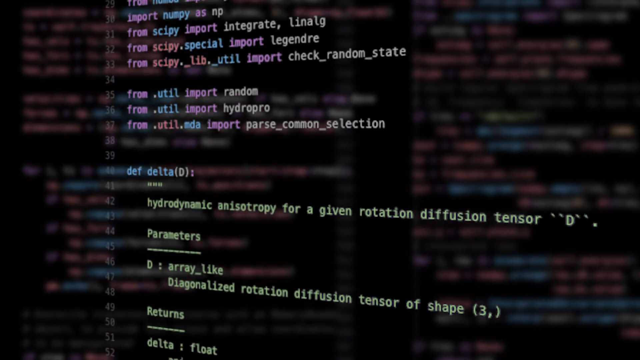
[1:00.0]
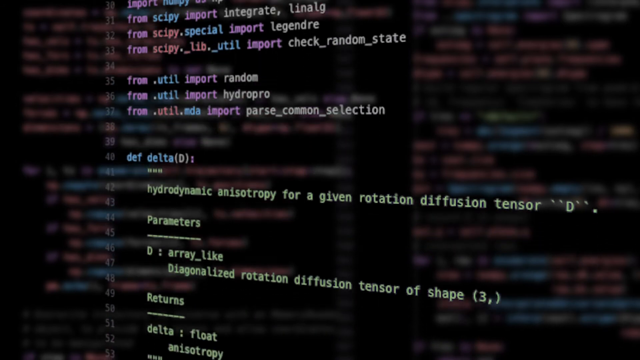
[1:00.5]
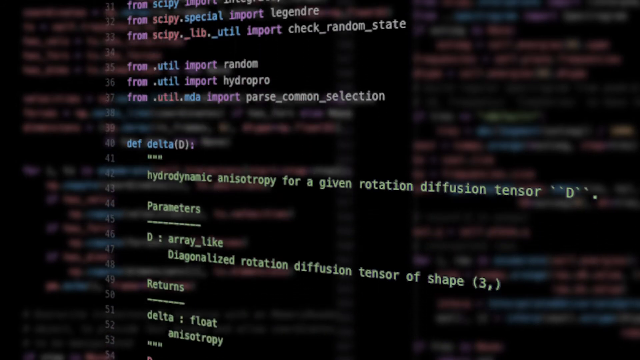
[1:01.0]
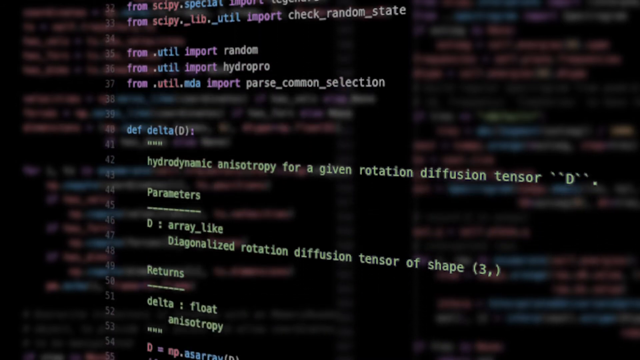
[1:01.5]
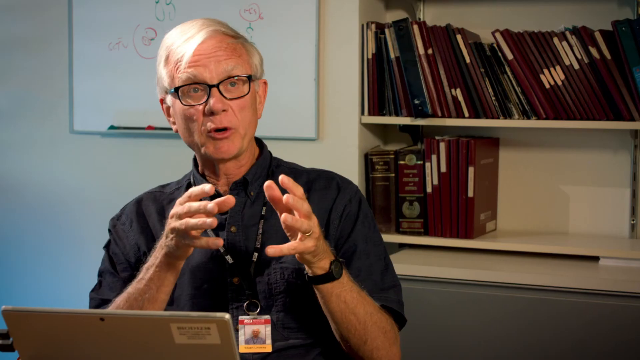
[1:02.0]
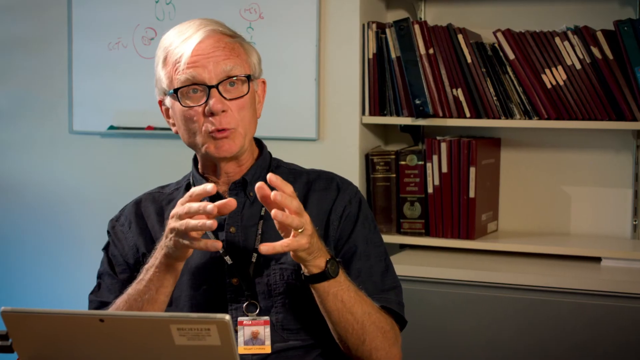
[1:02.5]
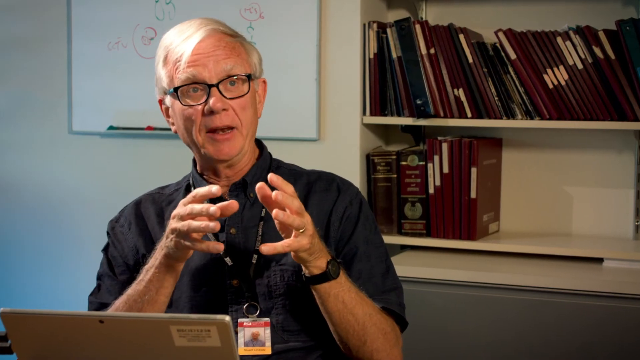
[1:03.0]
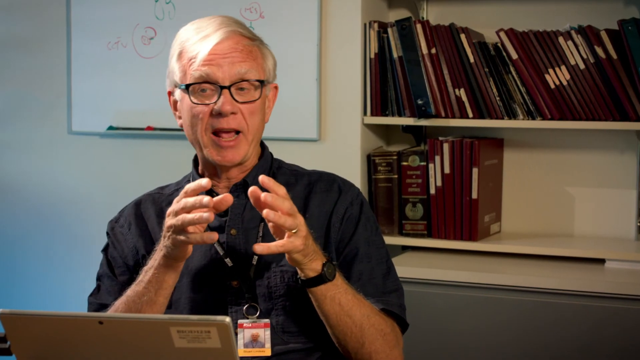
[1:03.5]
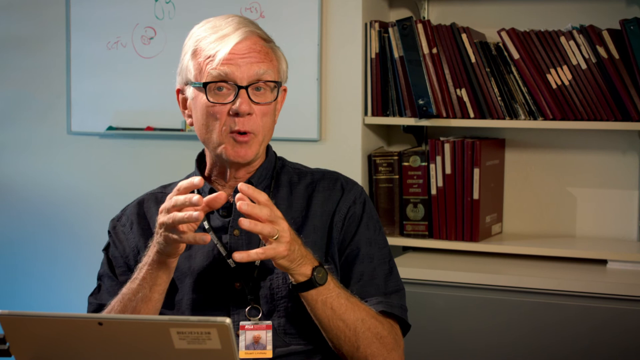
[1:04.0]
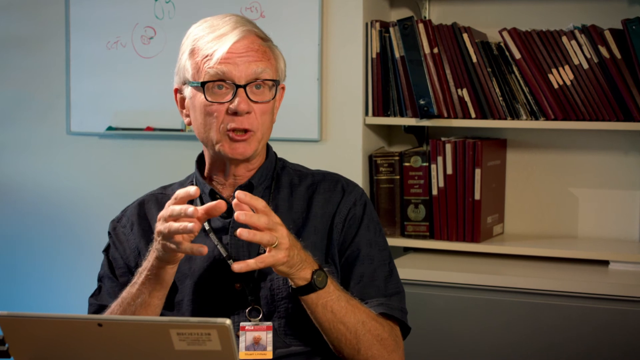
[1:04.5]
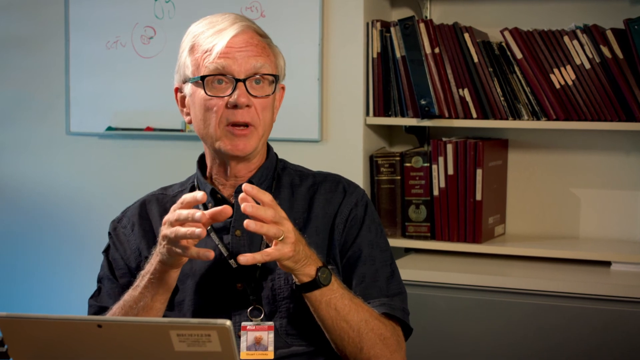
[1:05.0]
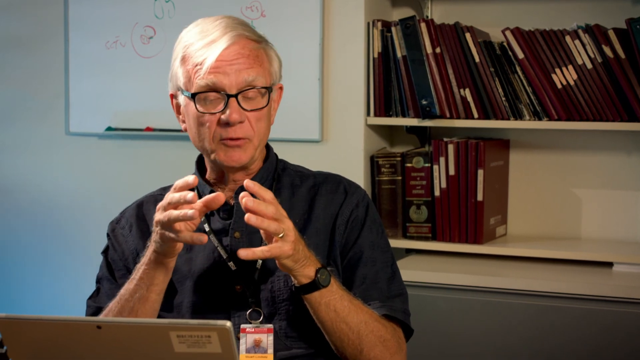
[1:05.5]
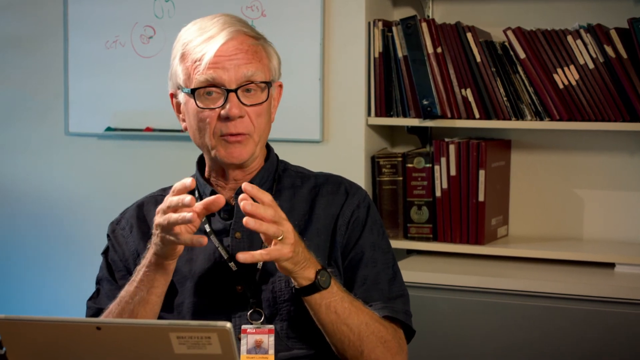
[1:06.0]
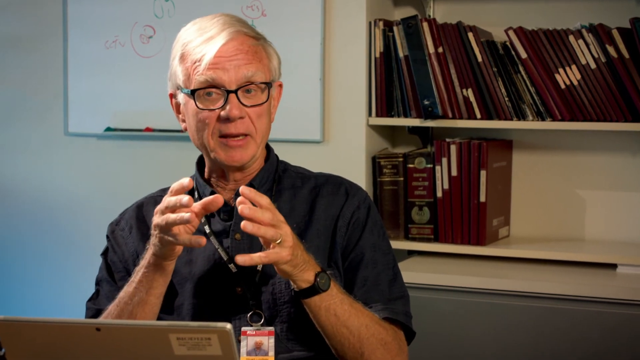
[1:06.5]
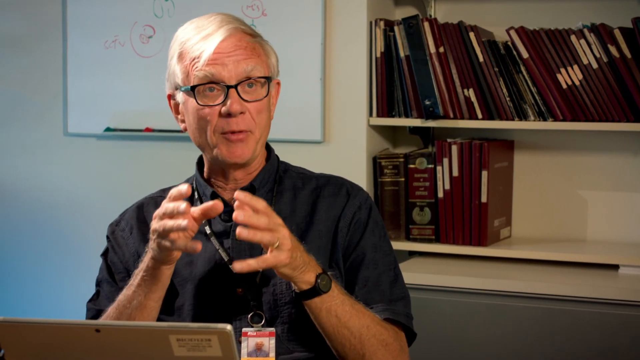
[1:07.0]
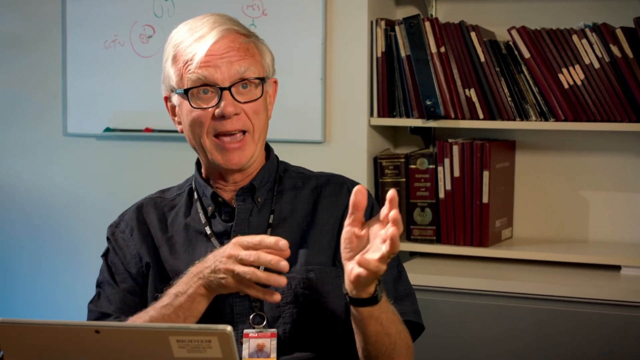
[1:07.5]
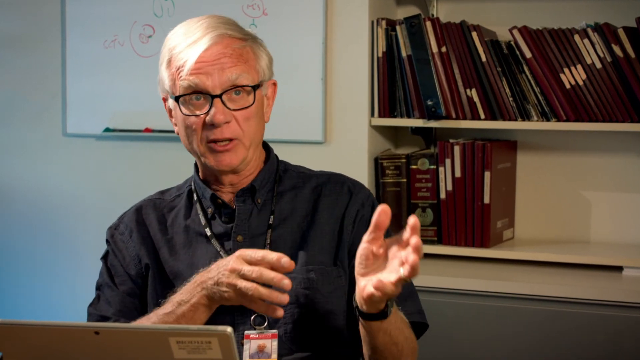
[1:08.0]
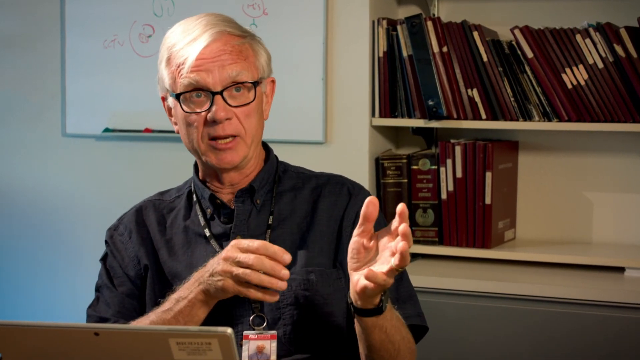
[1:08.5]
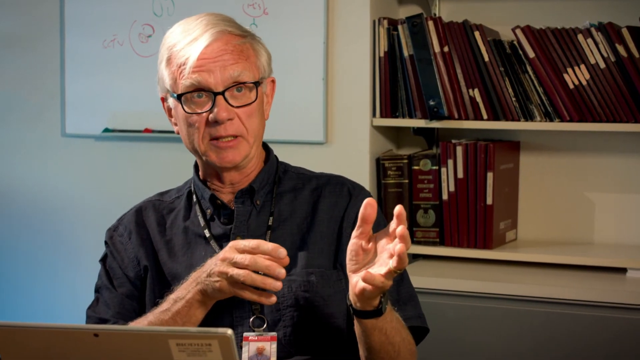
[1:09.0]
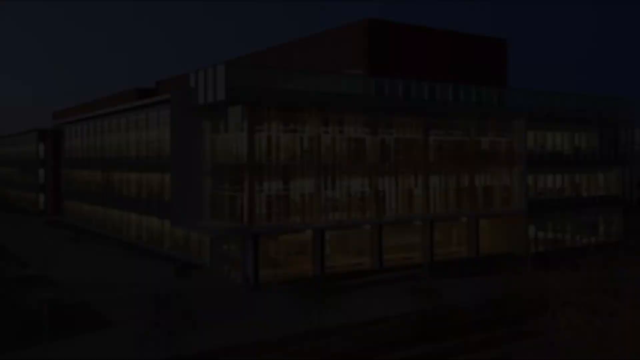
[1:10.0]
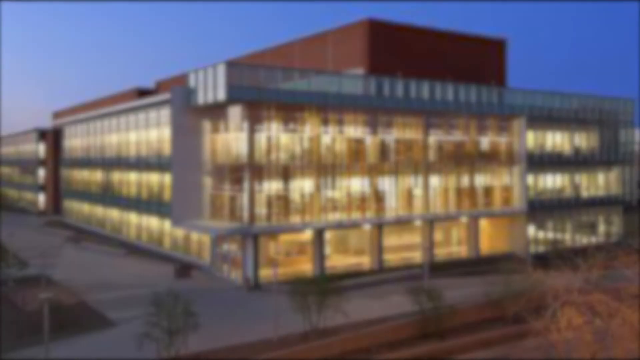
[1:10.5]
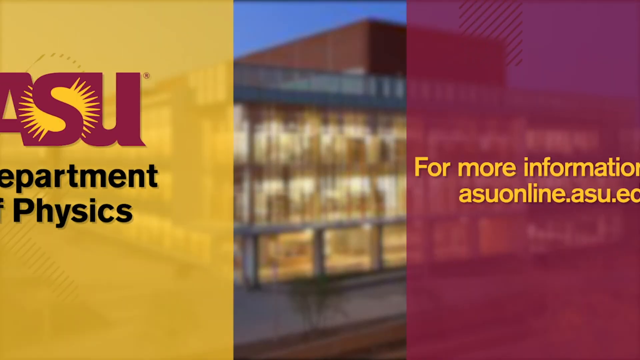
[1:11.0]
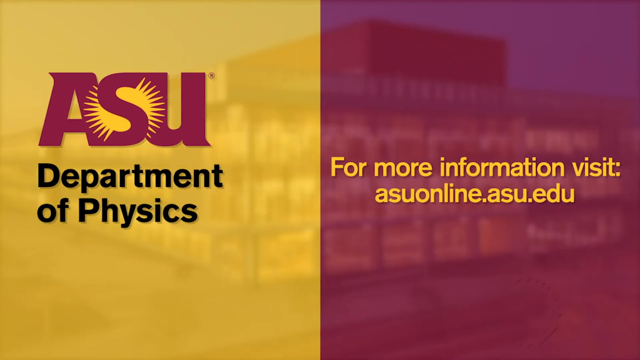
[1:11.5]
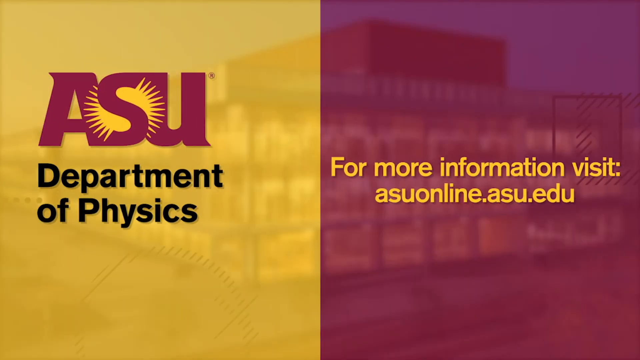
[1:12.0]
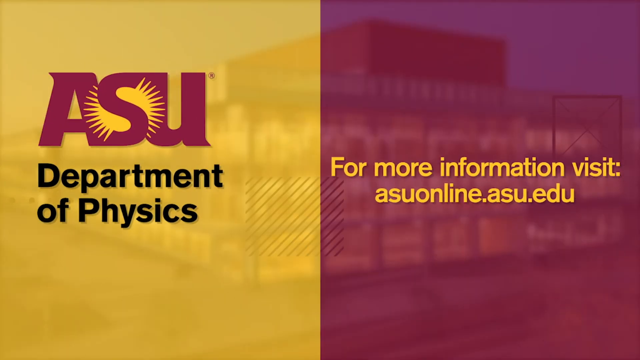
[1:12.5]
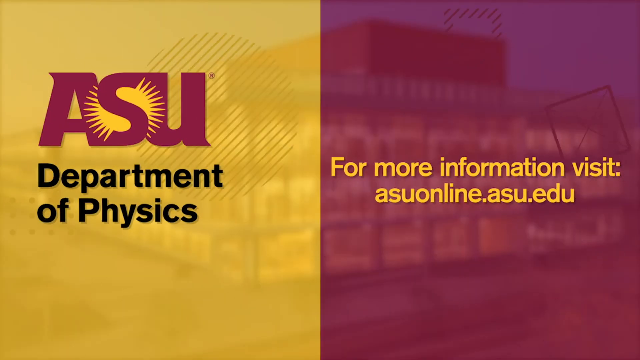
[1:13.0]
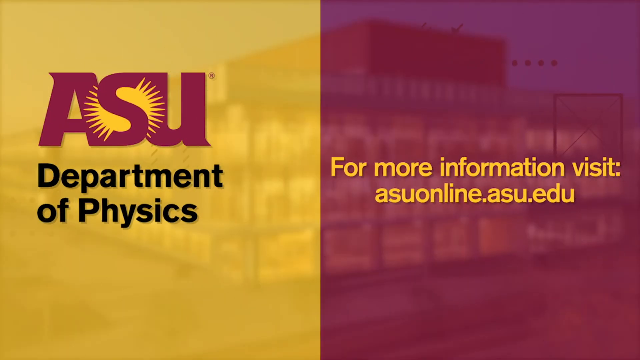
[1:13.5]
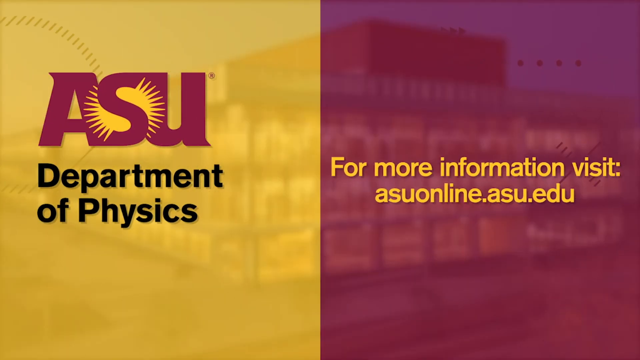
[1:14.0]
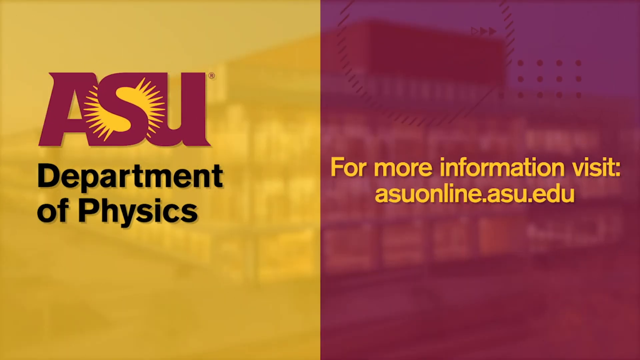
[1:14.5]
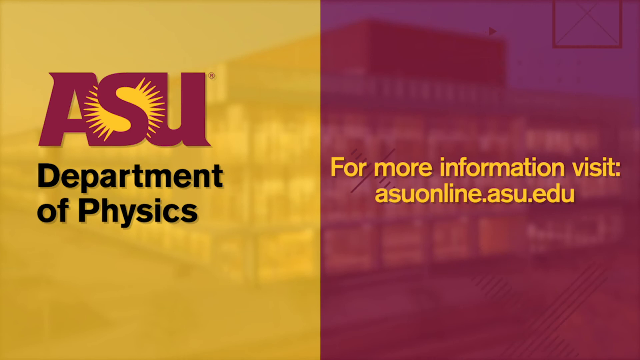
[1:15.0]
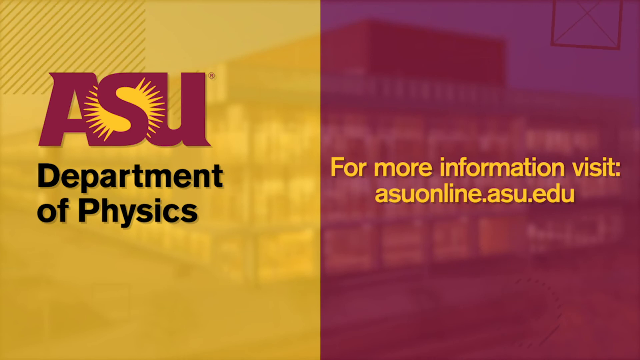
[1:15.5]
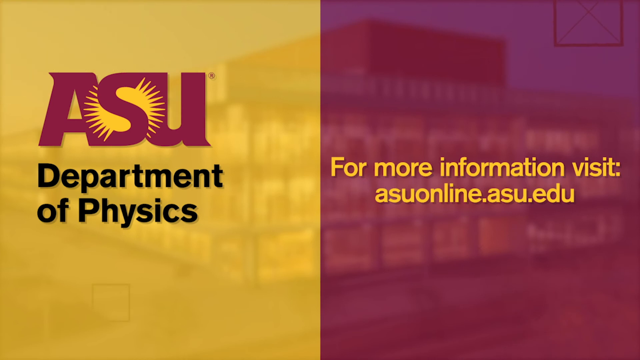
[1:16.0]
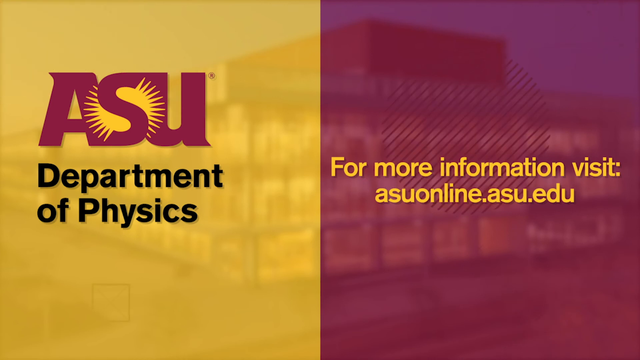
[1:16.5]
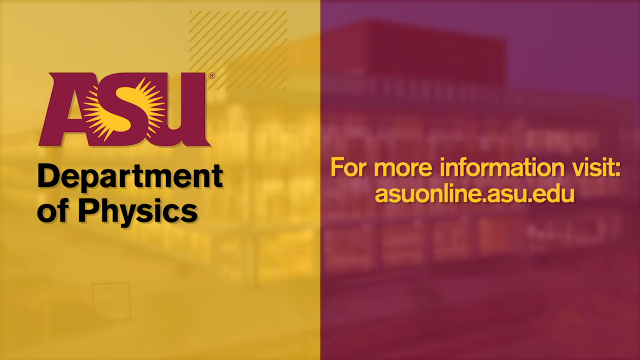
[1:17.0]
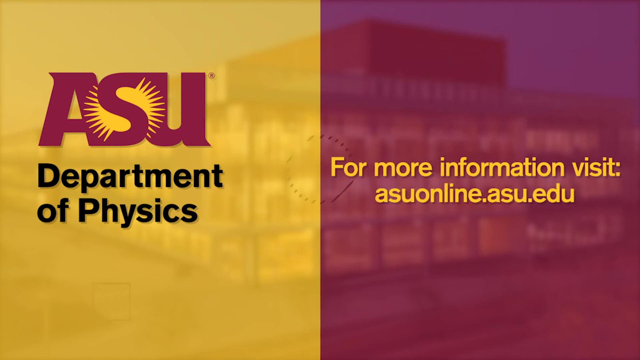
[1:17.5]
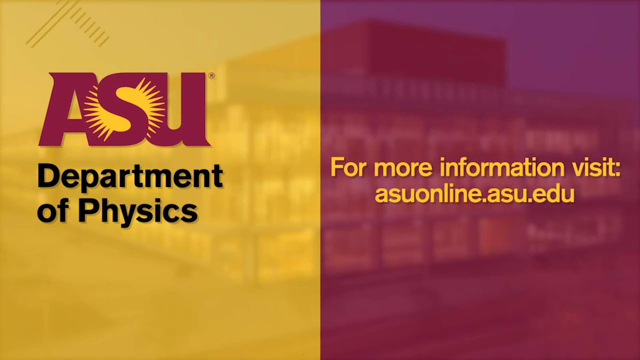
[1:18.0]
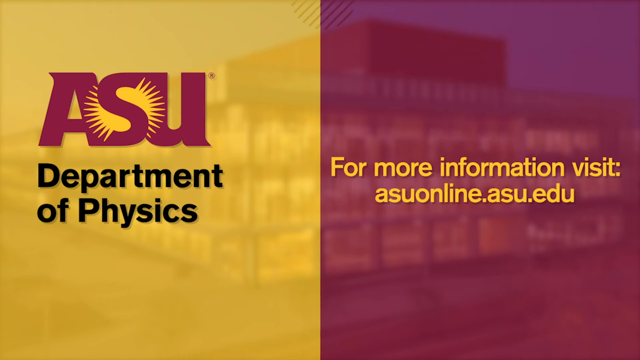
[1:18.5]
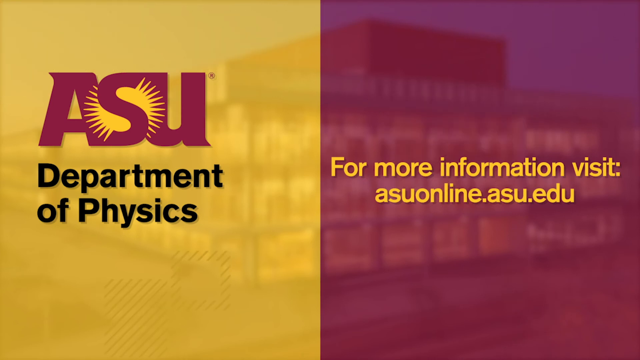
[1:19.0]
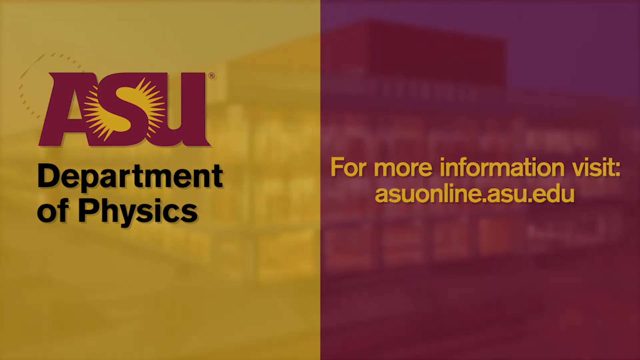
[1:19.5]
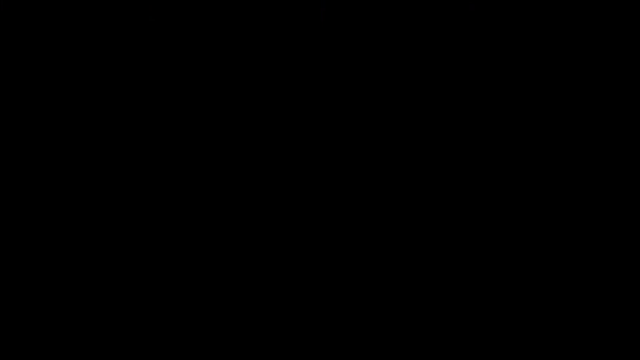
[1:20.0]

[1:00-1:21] A black screen scrolls quickly, and then the video returns to the man sitting behind a laptop at his desk. He talks with his hands in front of his body and then shifts to the left. A screen reads "ASU Department of Physics" and "For more information, visit asuonline.asu.edu," in gold or yellow and burgundy, and then shows "ASU" for more information. The screen text includes the words "rotation", "diffusion" and "tensor".